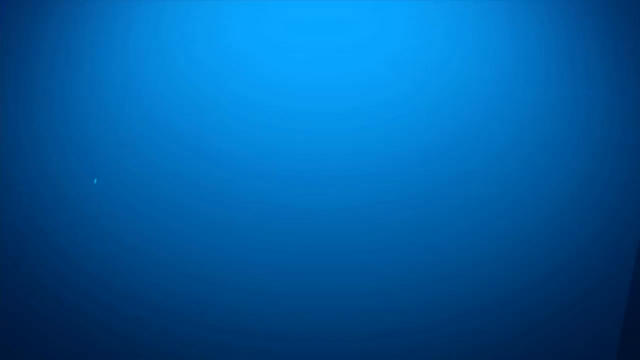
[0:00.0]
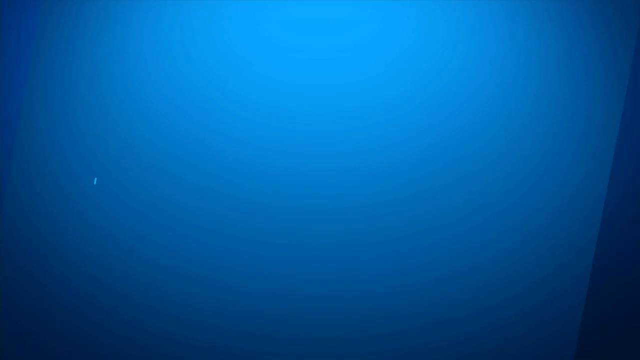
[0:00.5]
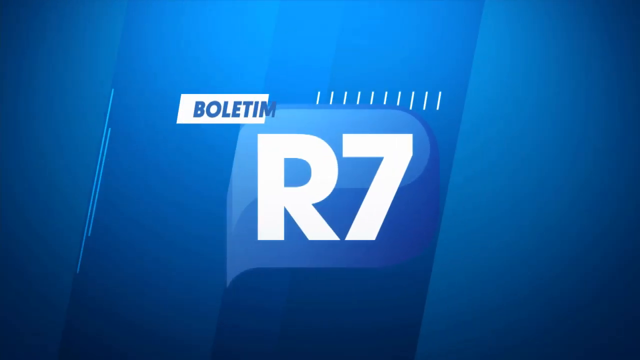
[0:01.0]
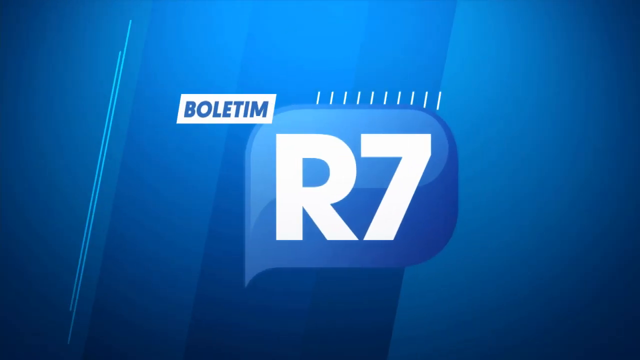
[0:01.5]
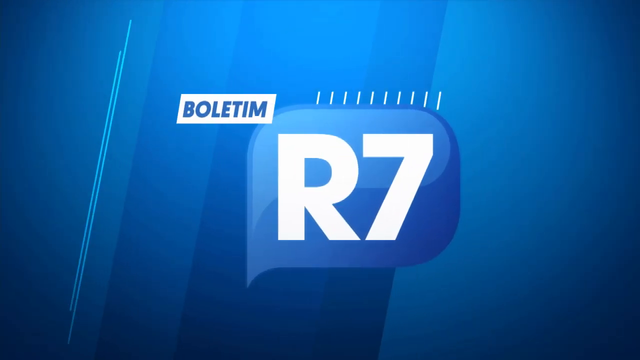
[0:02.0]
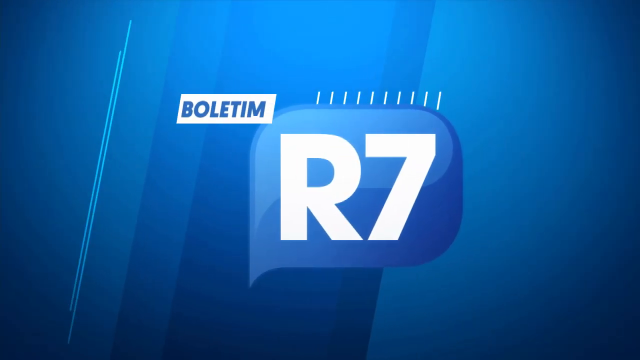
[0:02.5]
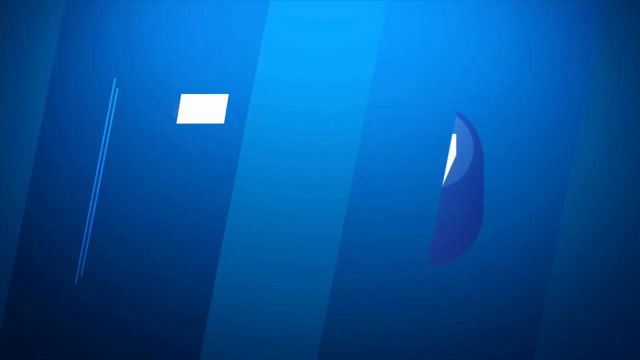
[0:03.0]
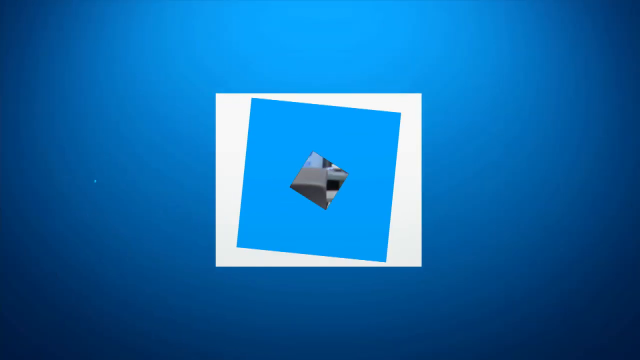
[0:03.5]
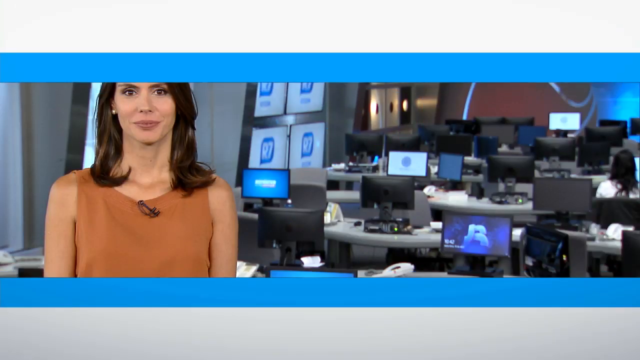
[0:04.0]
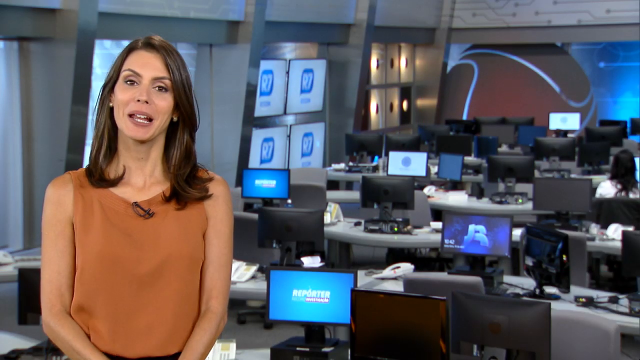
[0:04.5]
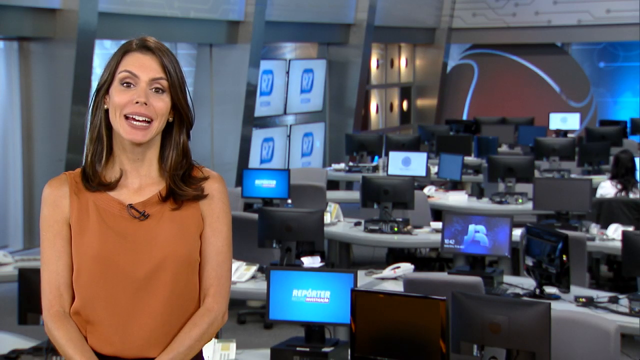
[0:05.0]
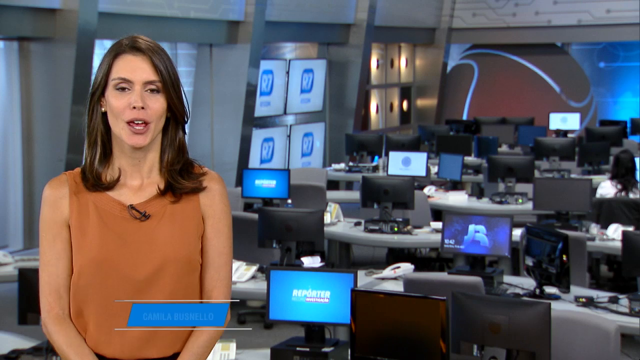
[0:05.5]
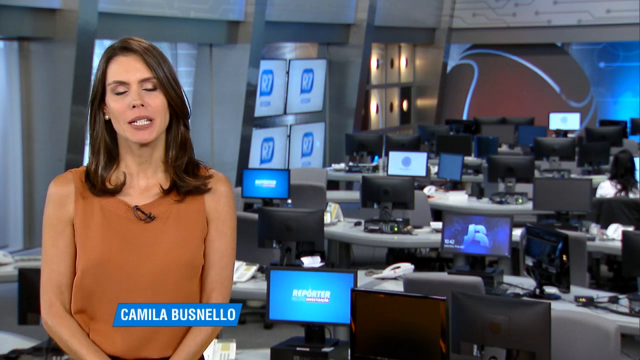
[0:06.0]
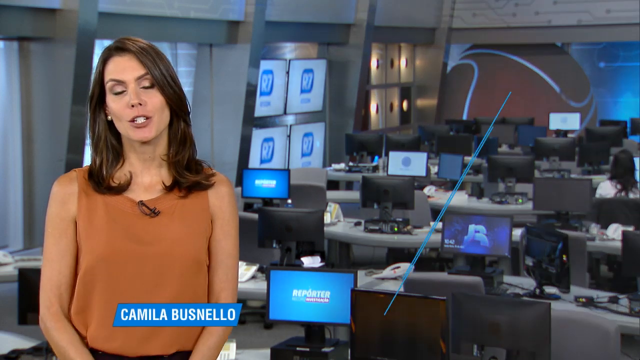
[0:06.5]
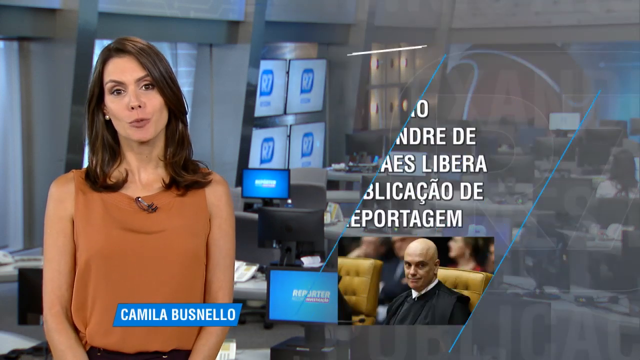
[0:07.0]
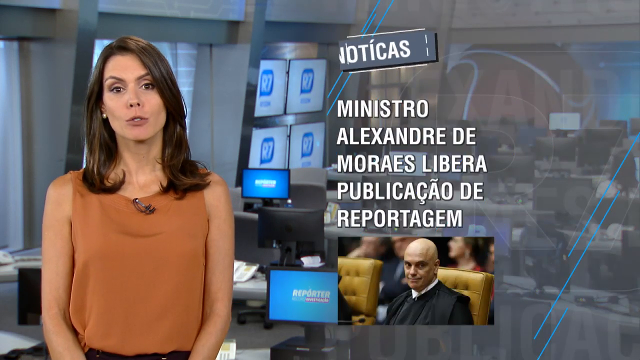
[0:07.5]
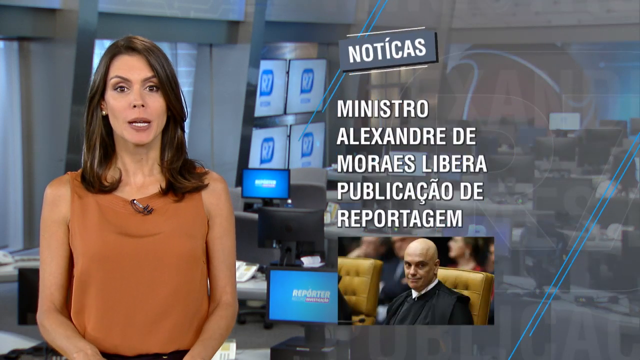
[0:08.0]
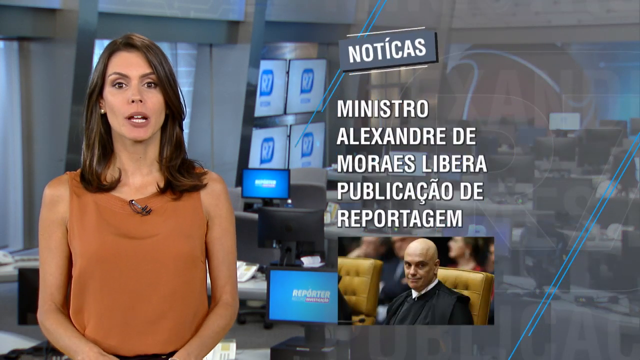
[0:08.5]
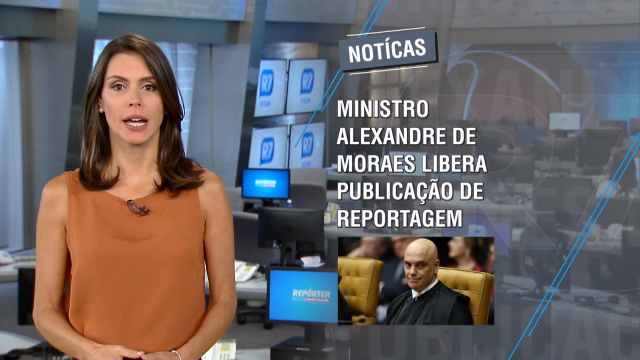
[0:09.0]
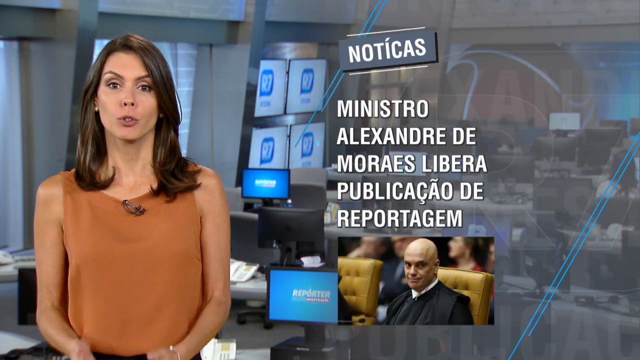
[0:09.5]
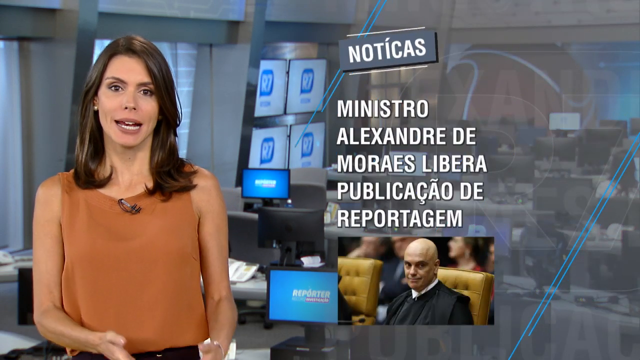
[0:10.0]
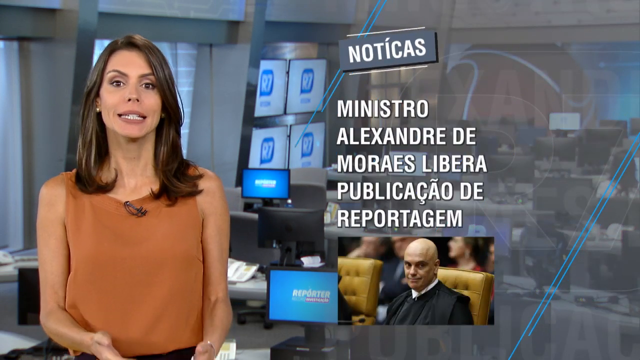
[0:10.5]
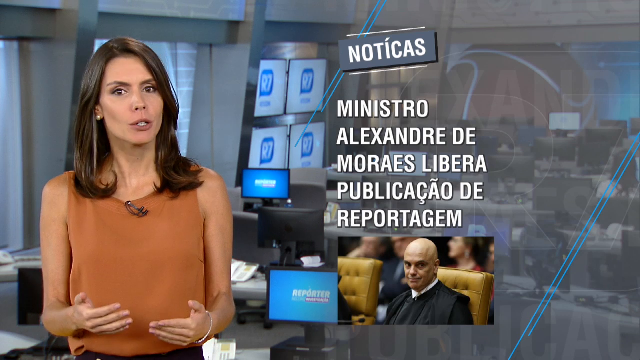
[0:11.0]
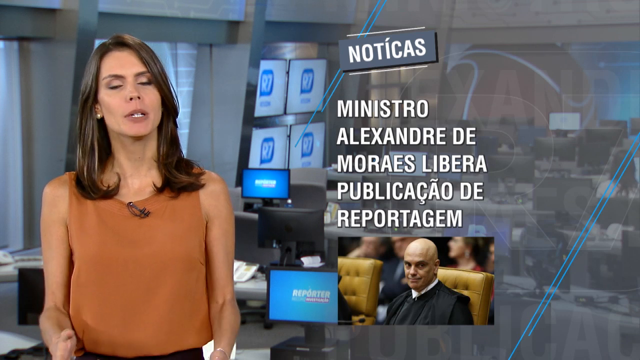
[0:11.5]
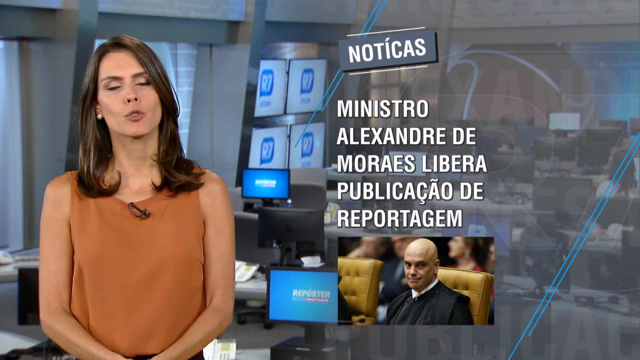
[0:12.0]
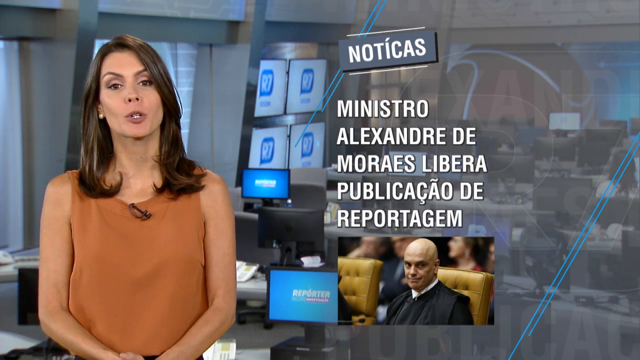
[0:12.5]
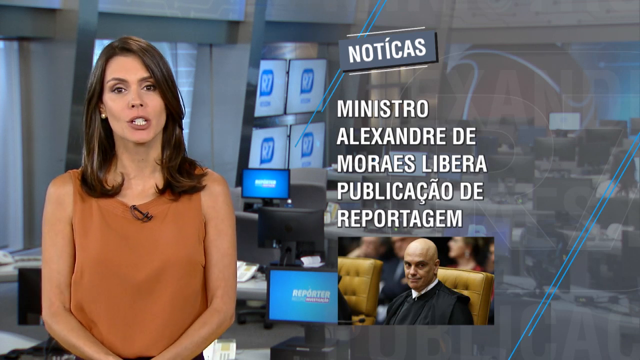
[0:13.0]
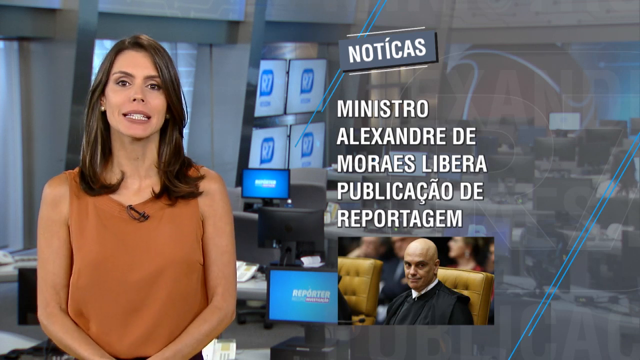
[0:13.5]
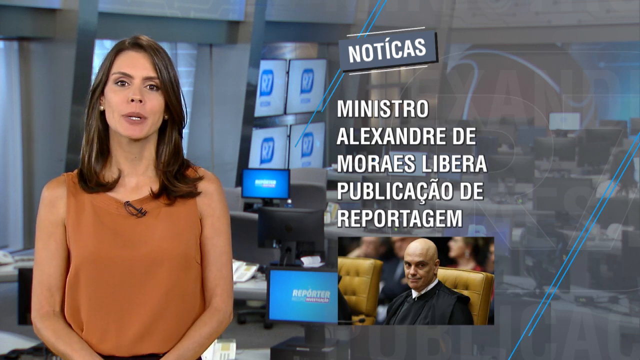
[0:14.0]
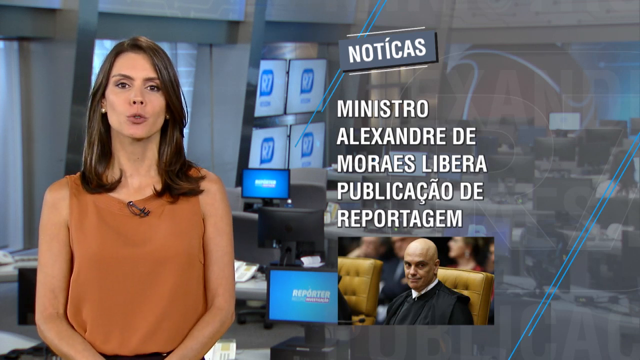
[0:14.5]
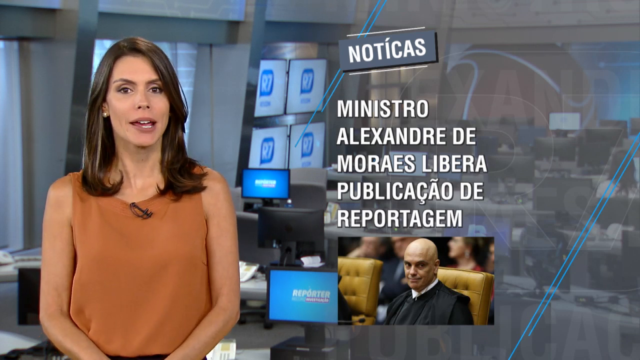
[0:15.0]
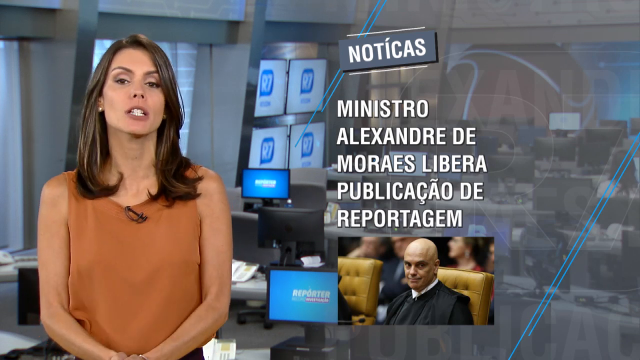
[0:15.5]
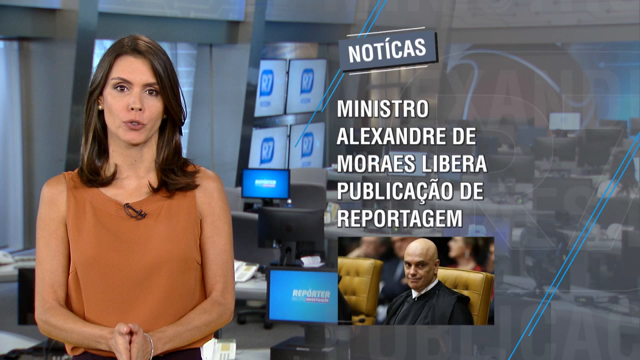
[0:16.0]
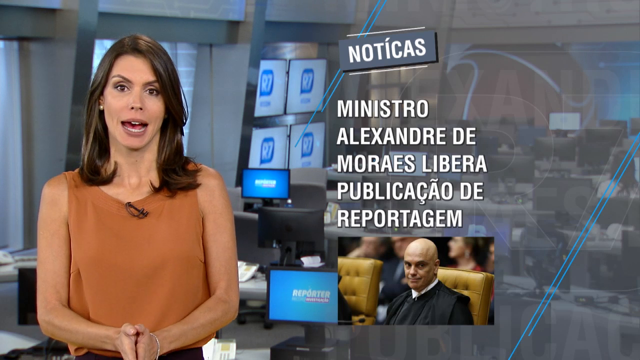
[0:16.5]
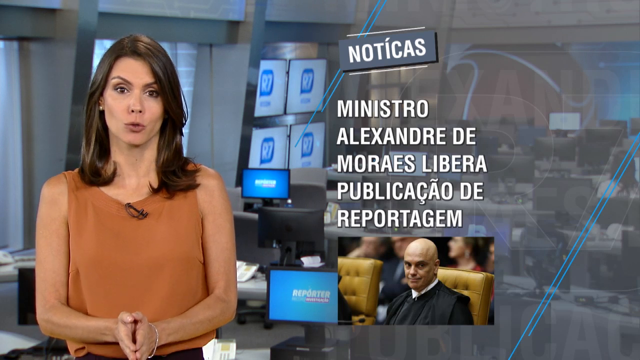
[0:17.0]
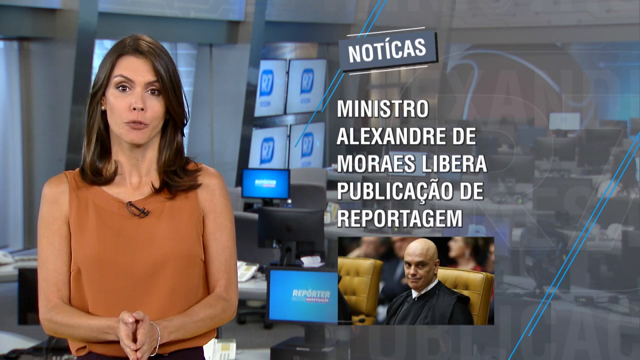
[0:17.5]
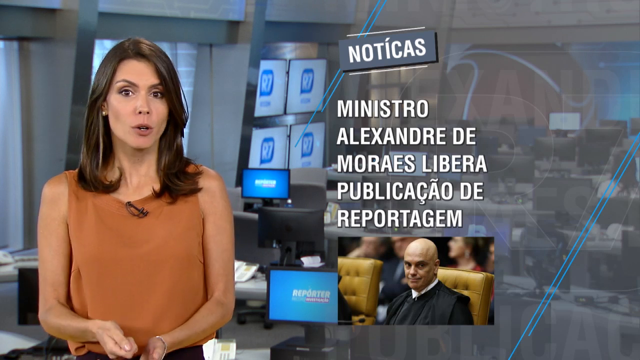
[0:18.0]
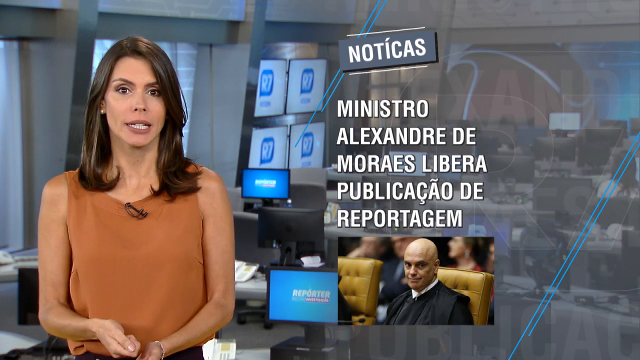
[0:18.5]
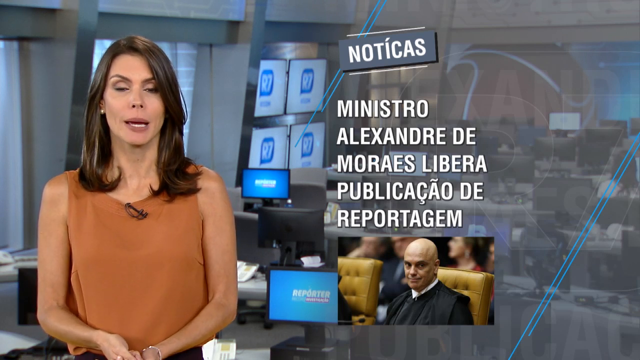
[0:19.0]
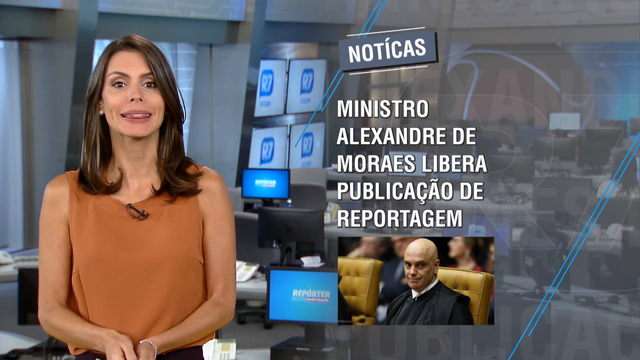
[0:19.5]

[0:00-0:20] The video opens on a blue background, then cuts to a newsroom with rows of desks, computer monitors on top of the desks, and TV screens mounted on the side panel. The newscaster is Camila Basnello, and the news show is in Brazilian Portuguese. A list appears to her right that says "the Minister Alexander Moraes," about a publication concerning him, and it states "minister authorizes publication of reportage." A photo of him is below the list on the right side of the screen, under "Noticias."